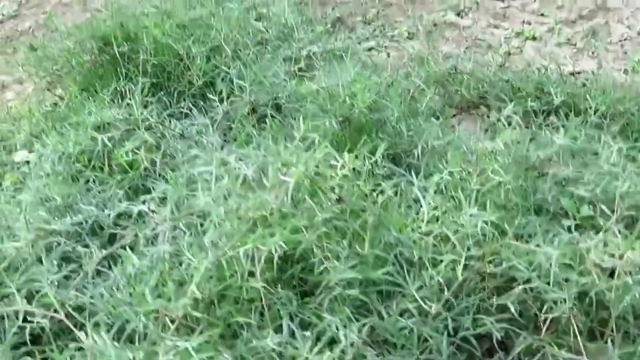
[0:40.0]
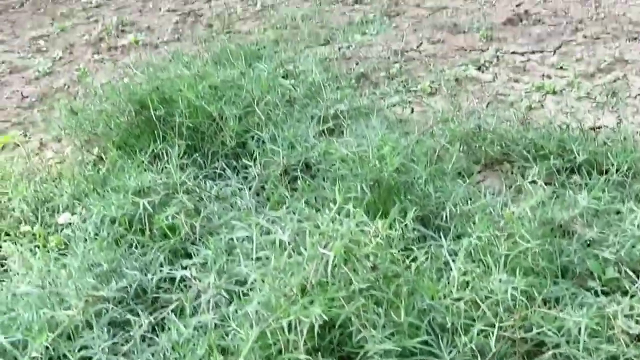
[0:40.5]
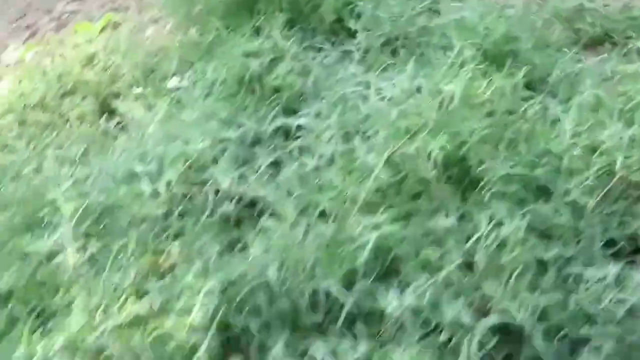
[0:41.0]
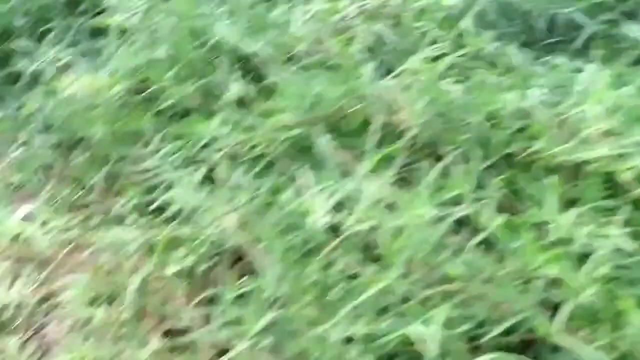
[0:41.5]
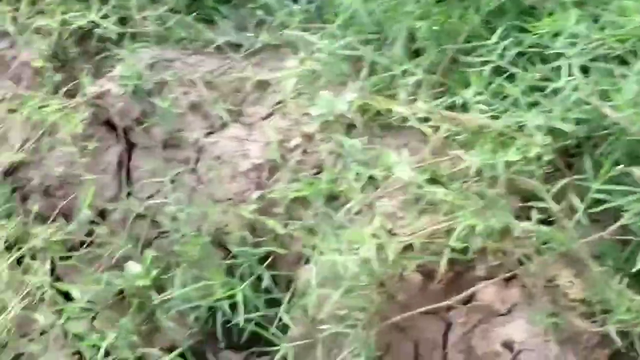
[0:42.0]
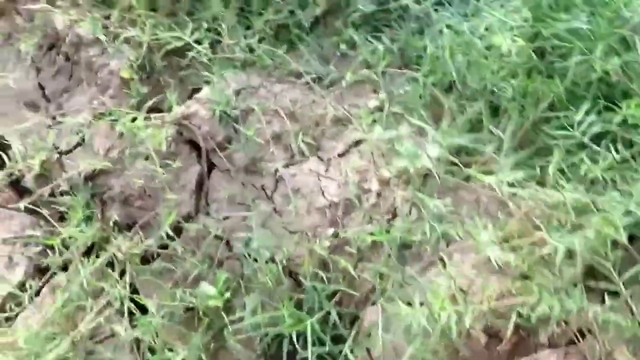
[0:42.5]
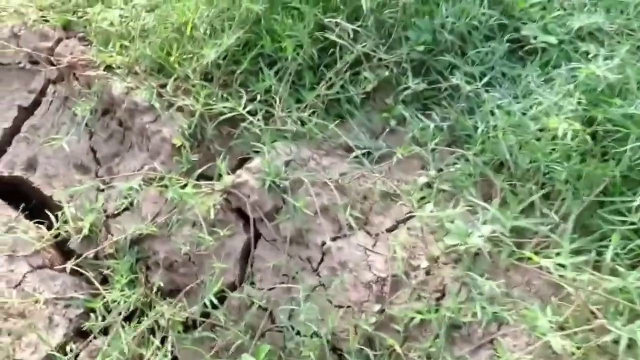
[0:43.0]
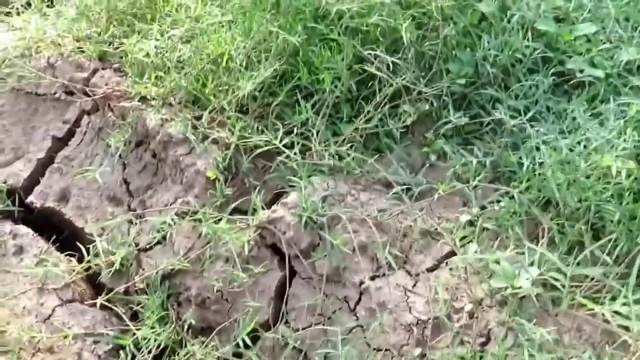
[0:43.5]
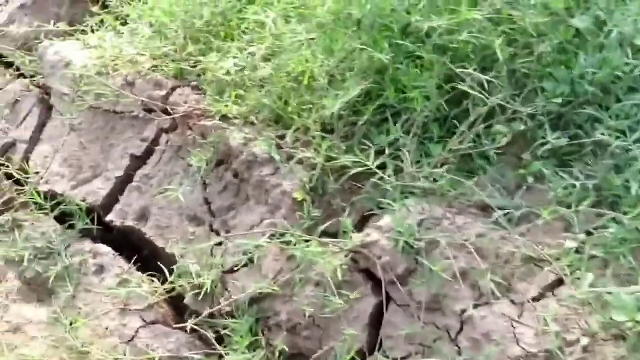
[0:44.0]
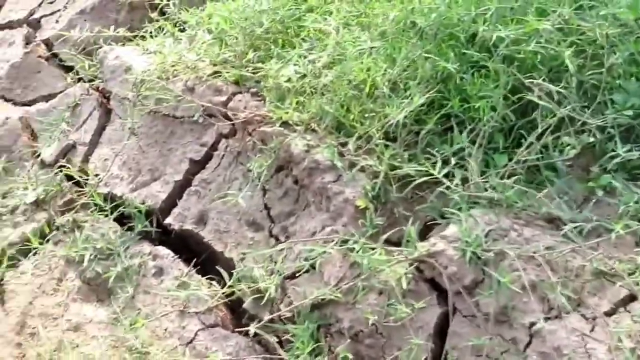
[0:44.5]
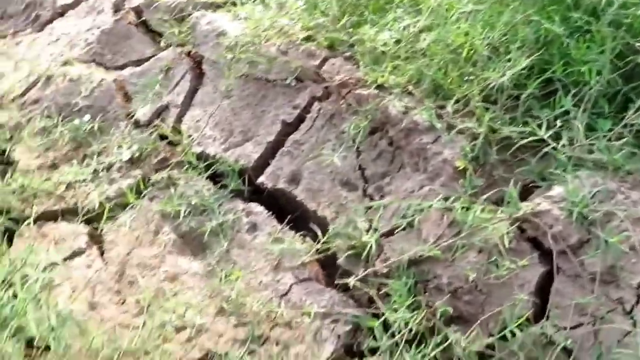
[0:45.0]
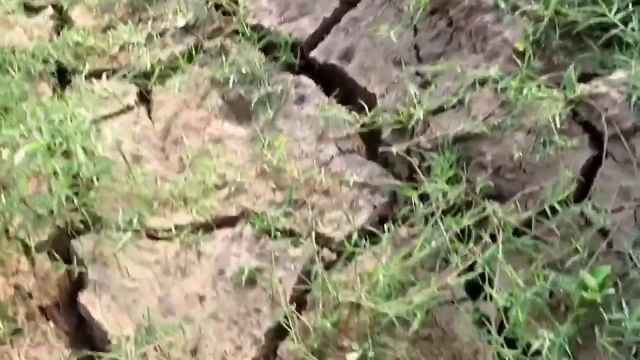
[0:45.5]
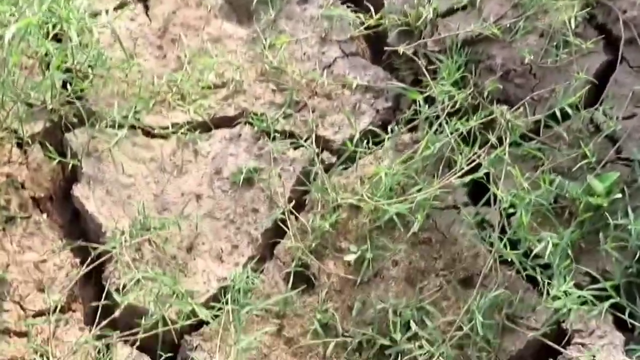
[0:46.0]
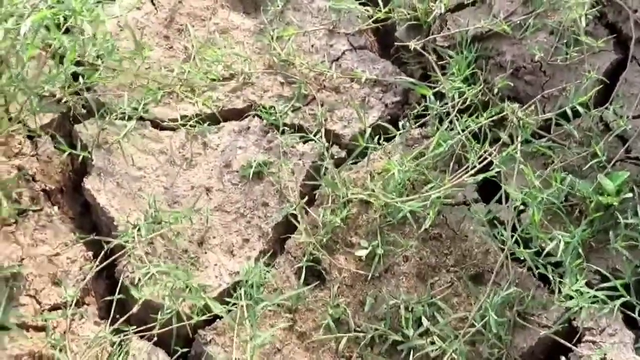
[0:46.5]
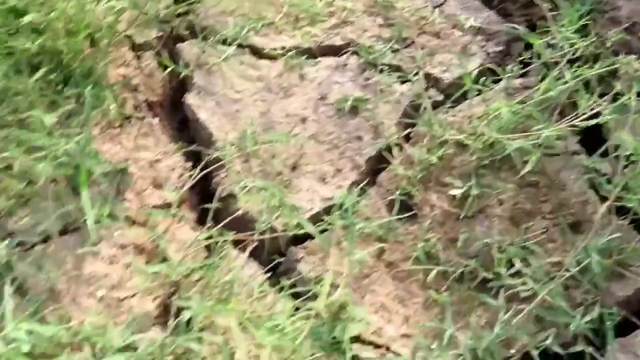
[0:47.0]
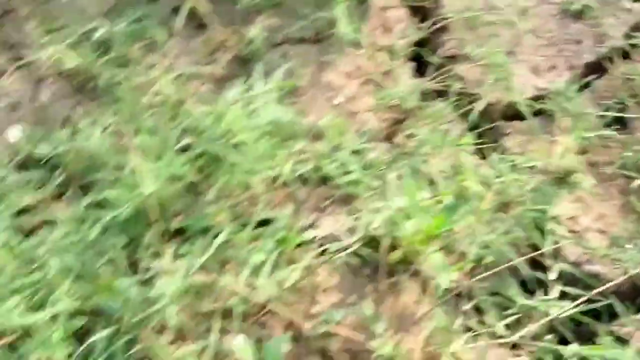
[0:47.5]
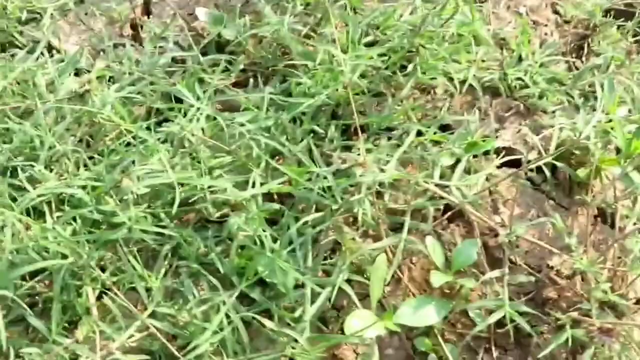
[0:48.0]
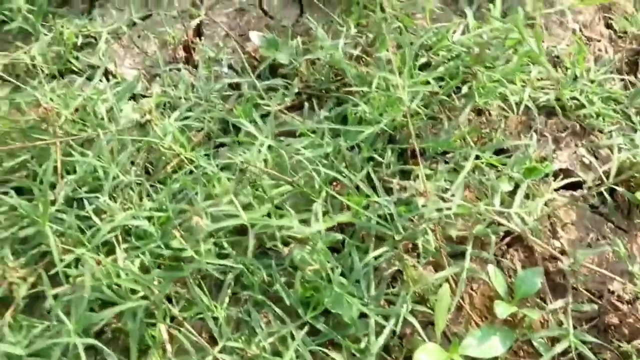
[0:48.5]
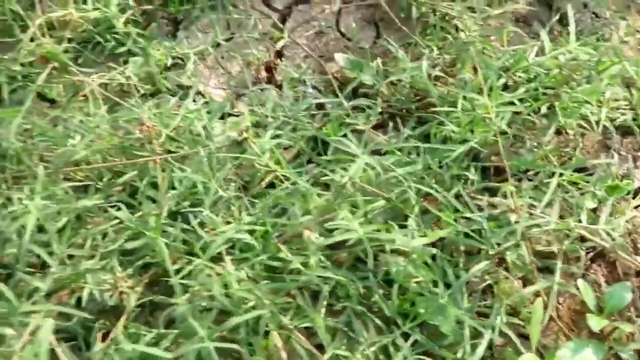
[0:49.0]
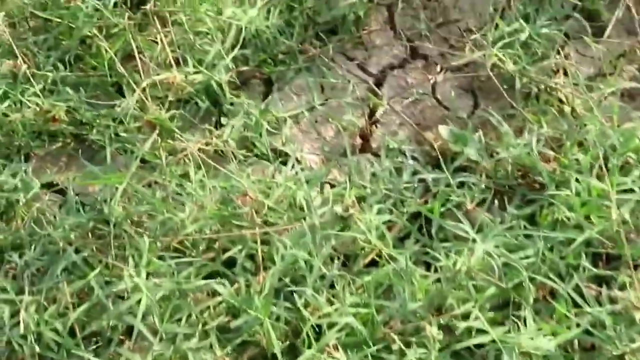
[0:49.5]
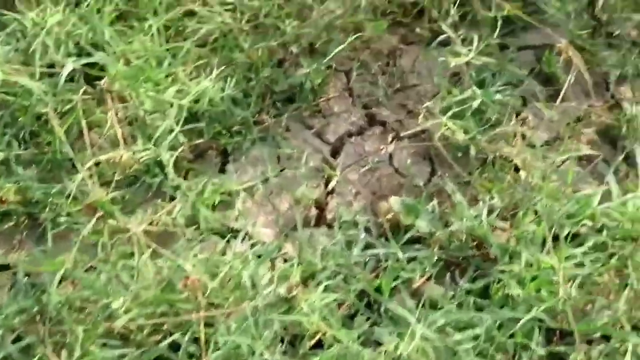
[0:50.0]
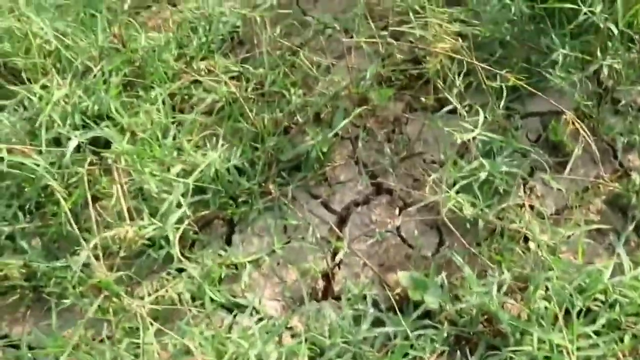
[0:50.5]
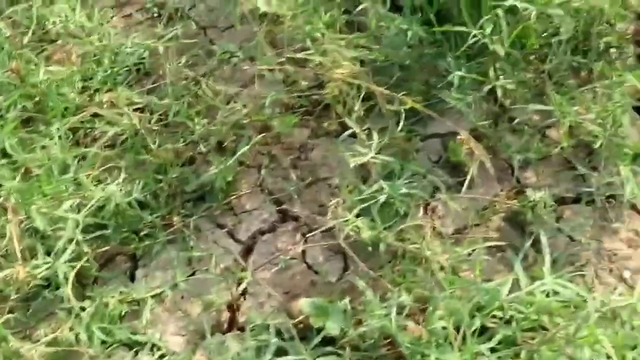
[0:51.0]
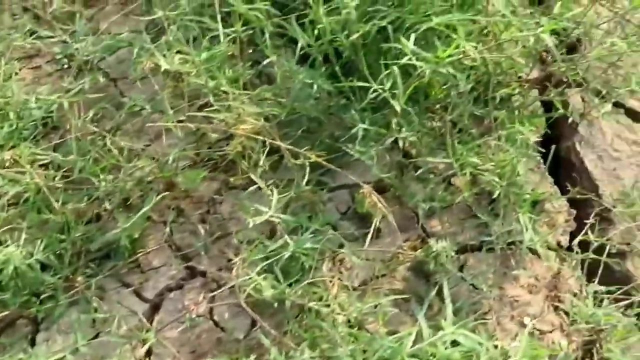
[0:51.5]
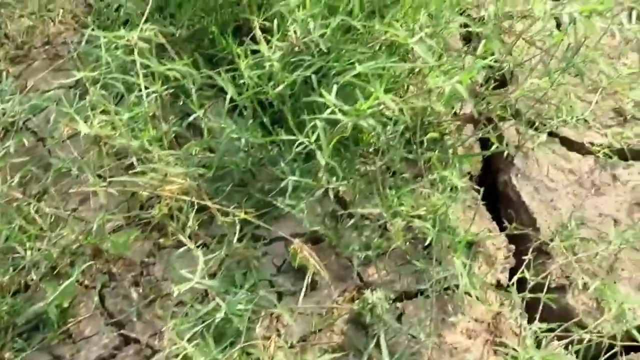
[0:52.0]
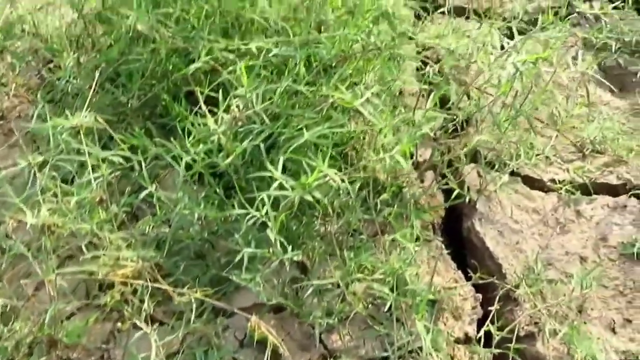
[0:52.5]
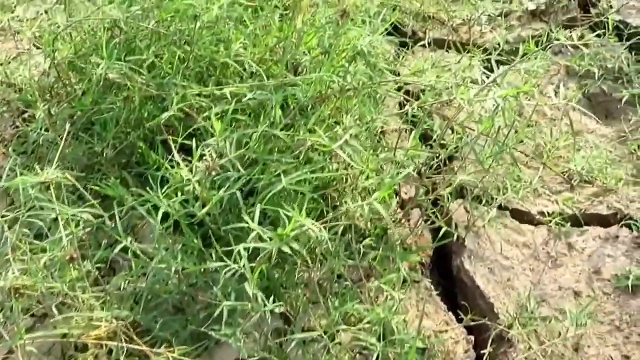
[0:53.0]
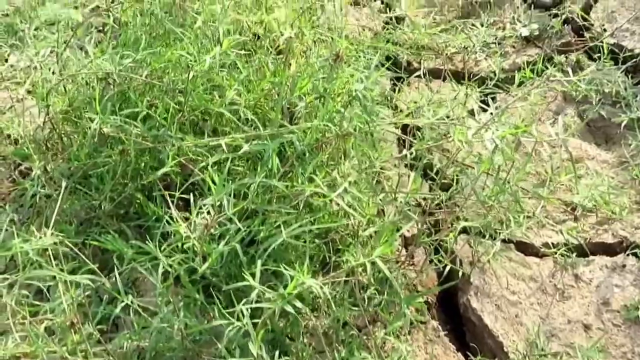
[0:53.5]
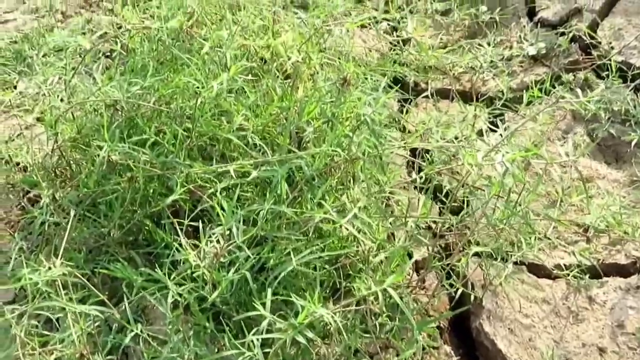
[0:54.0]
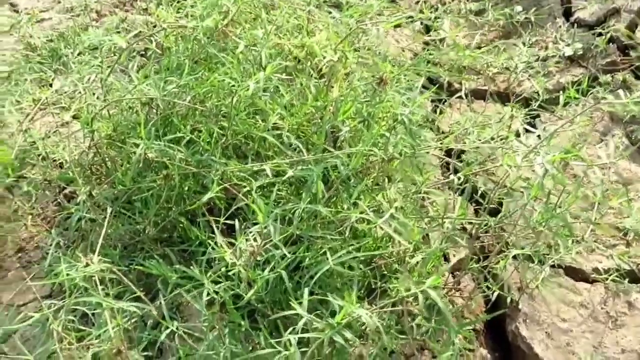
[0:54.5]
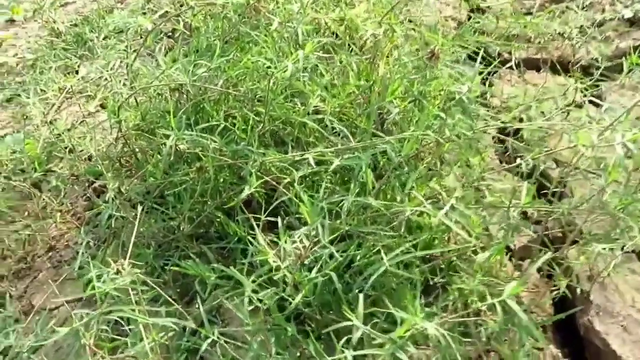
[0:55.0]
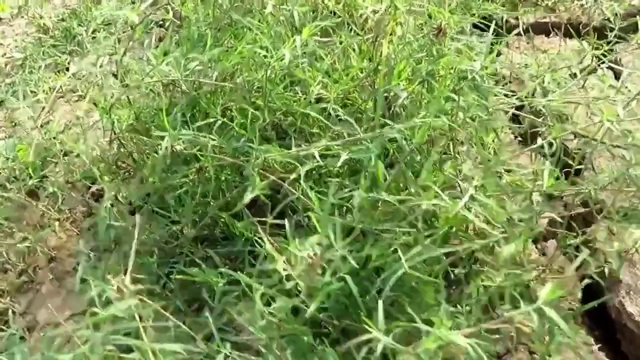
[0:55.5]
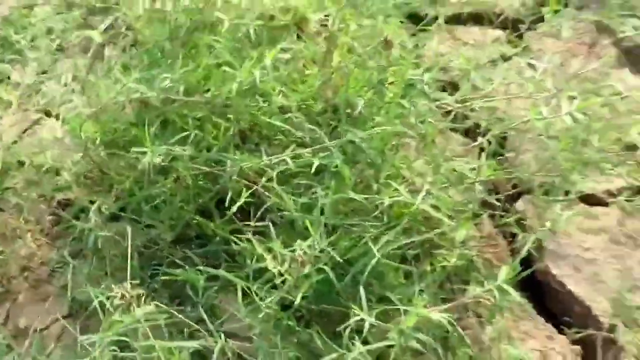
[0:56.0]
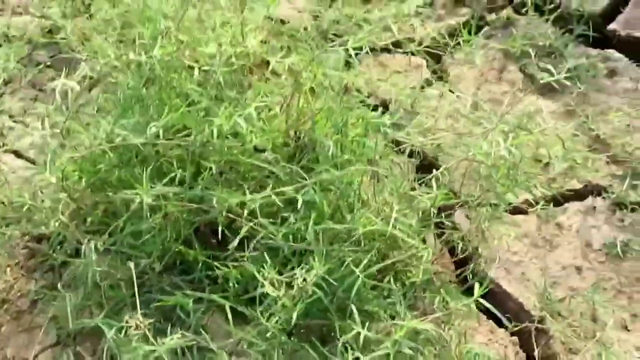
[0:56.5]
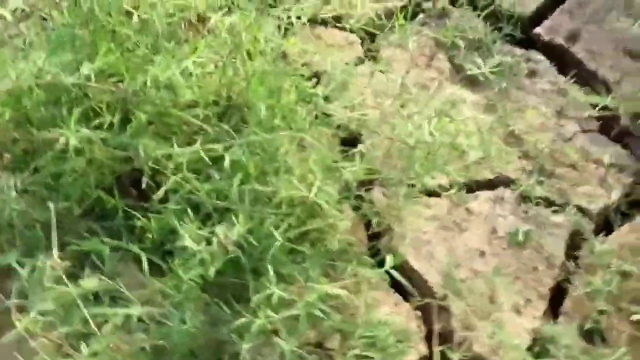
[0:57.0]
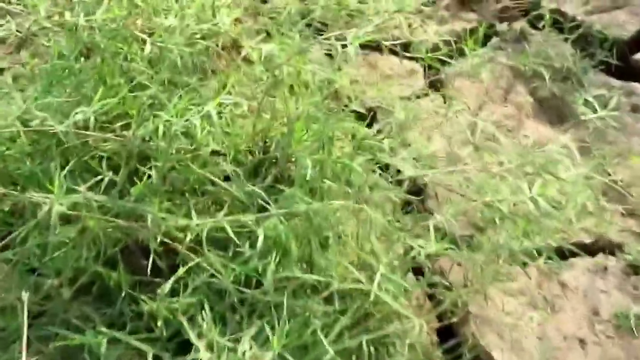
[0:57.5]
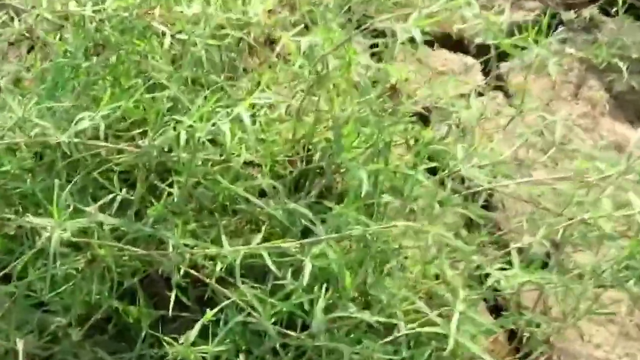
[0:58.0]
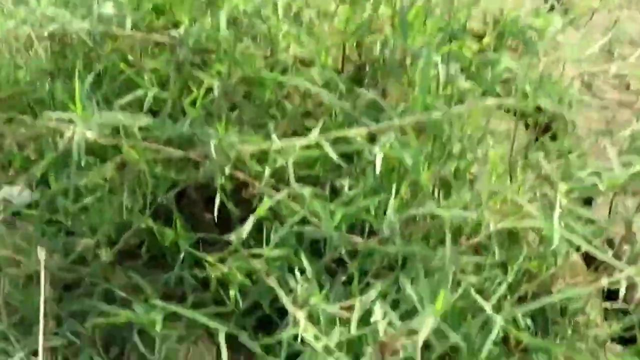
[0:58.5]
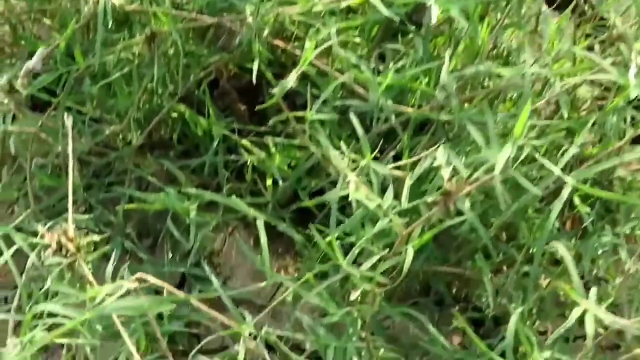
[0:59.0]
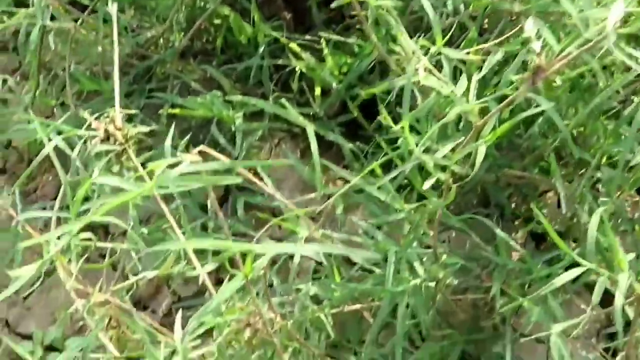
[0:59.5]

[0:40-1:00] A moving view continues over long grass, with dry dirt showing from the sides of the grass. No animals or people appear, and the time of day is most likely sometime in the early afternoon. Around the middle, the camera pans downward slightly and shows predominantly what seems to be dirt or rocky ground. The dirt is light brown, incredibly dry and cracked in a number of places, seemingly deep into the earth. After the camera runs along this dirt path, it returns to a patch of what seems to be long grass, a small clump surrounded on all sides by the dry dirt. There is no significant activity or change.